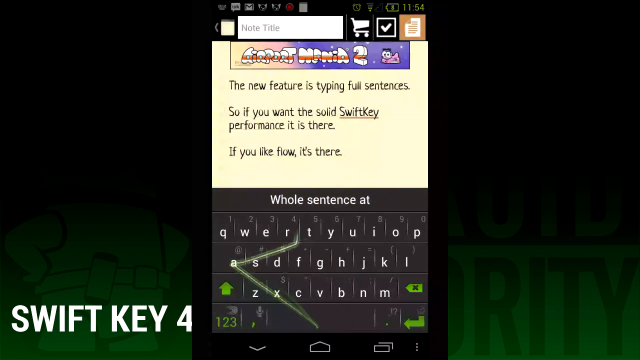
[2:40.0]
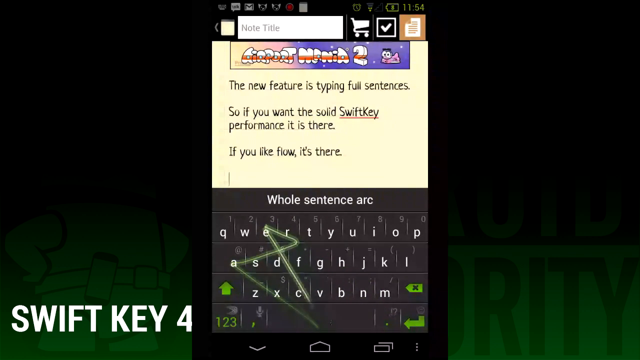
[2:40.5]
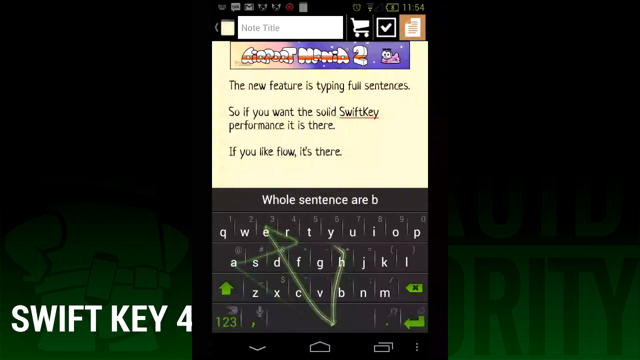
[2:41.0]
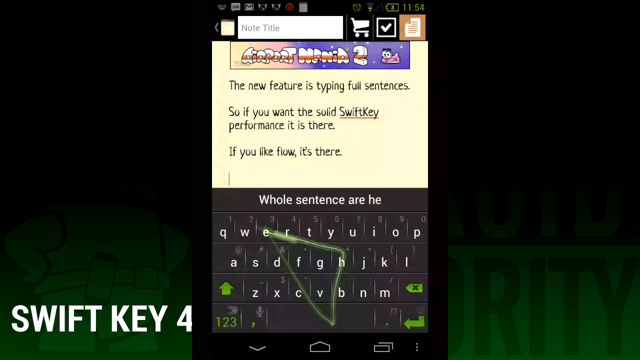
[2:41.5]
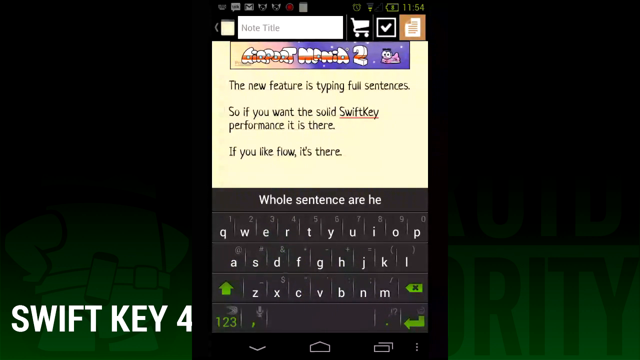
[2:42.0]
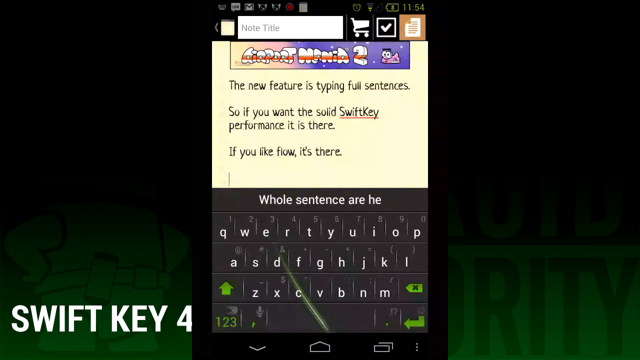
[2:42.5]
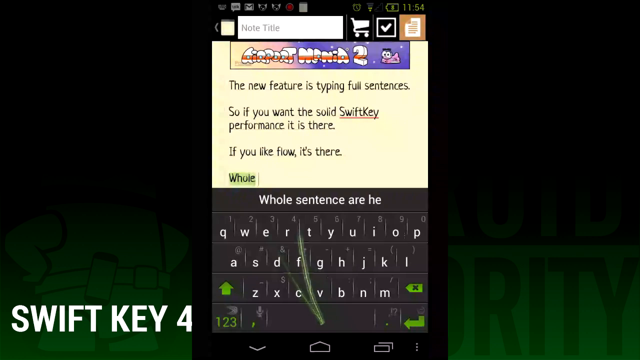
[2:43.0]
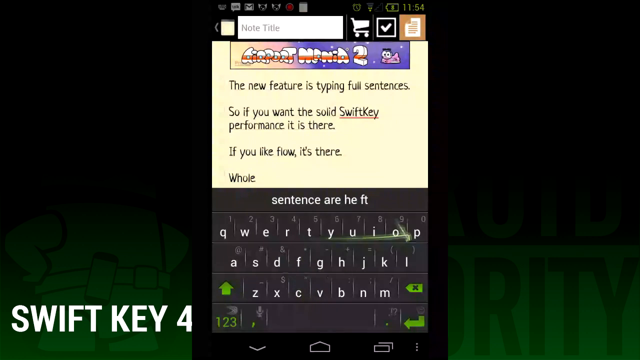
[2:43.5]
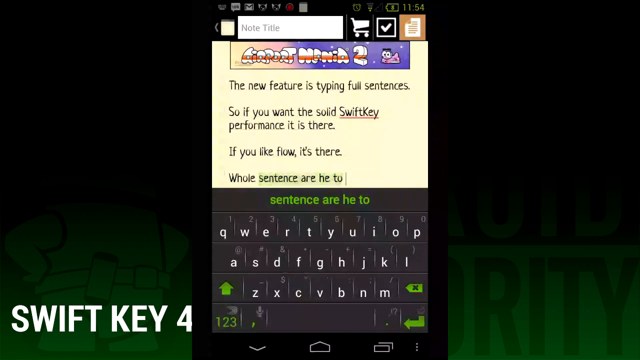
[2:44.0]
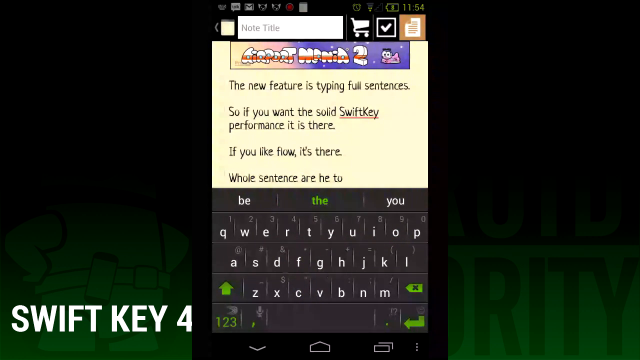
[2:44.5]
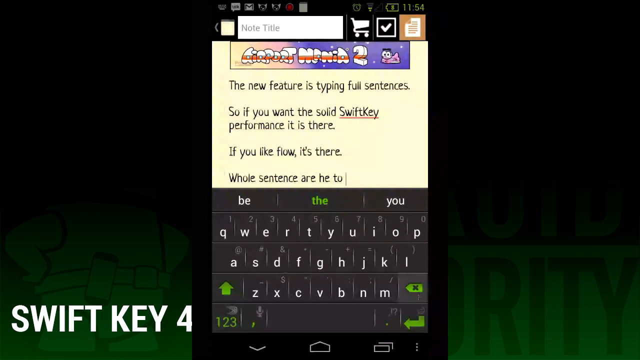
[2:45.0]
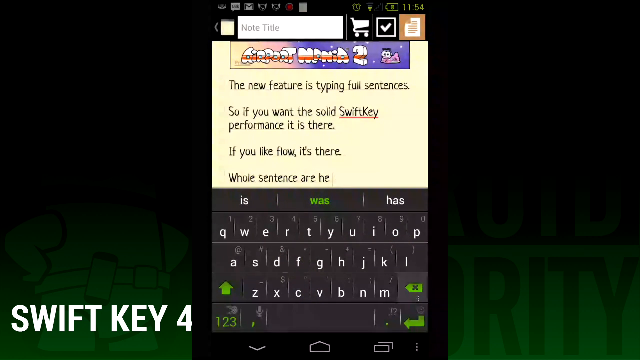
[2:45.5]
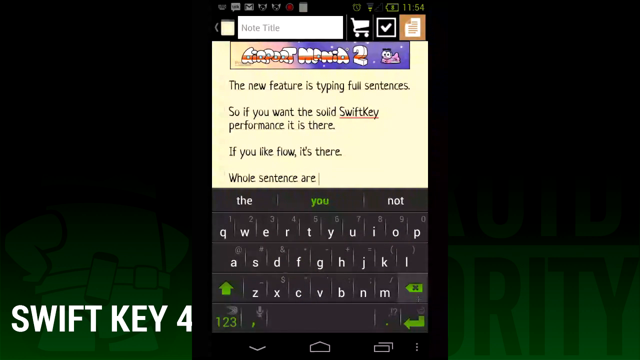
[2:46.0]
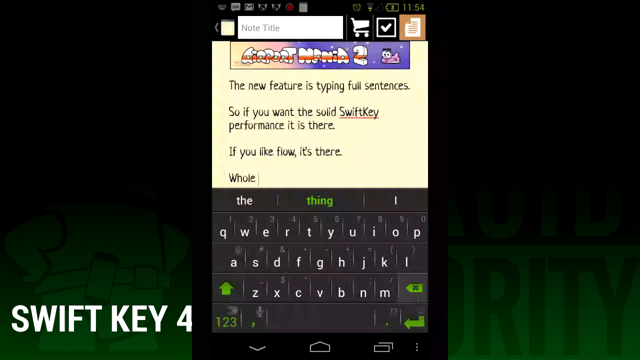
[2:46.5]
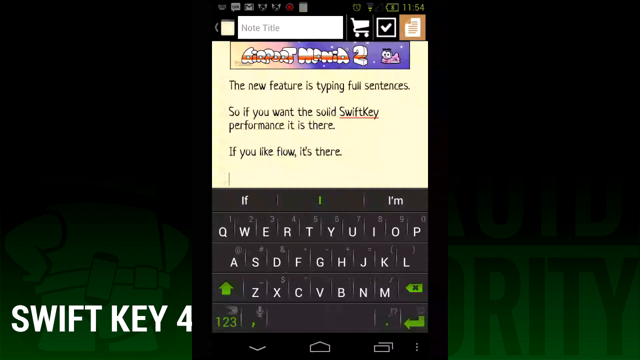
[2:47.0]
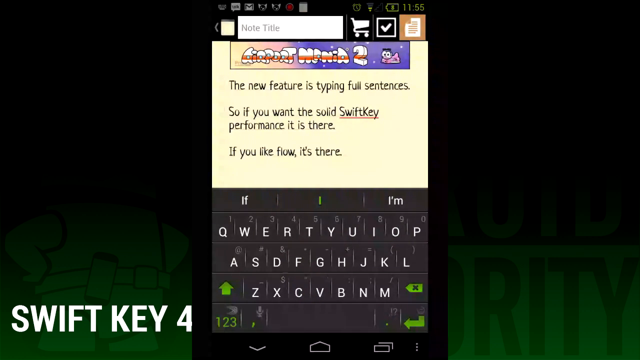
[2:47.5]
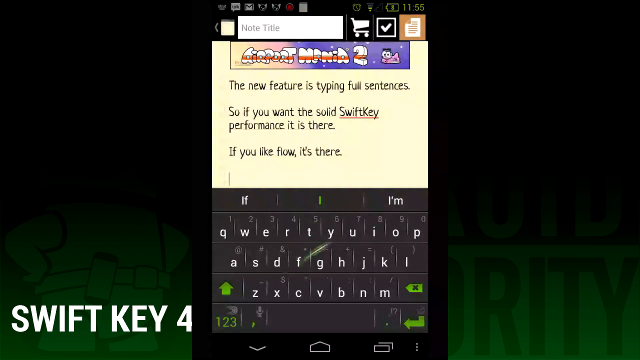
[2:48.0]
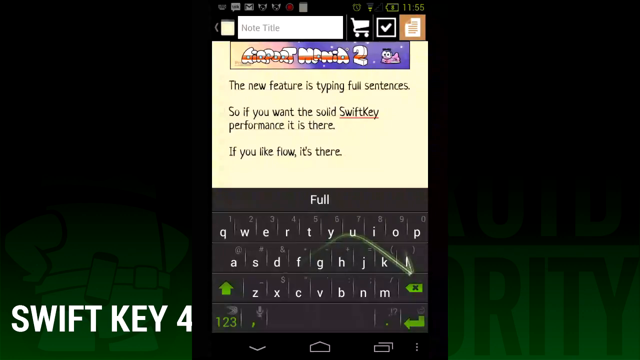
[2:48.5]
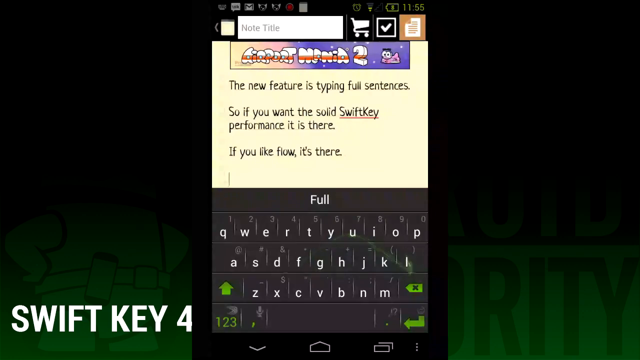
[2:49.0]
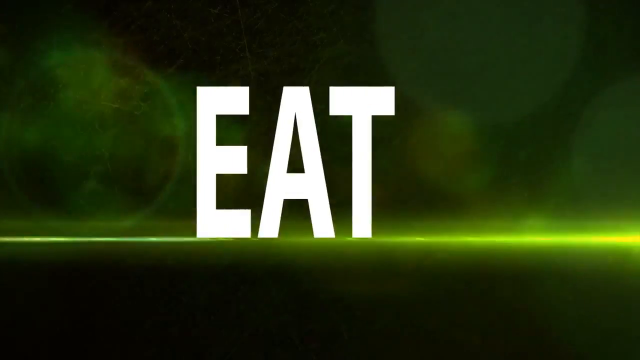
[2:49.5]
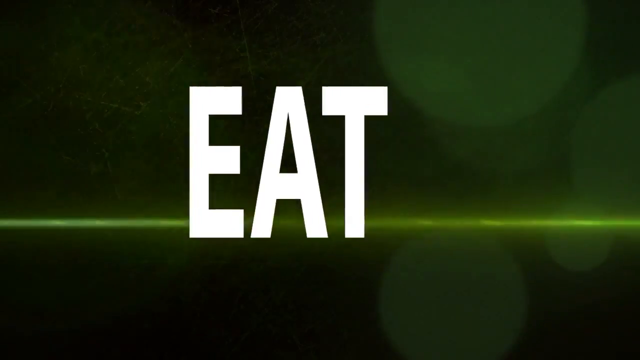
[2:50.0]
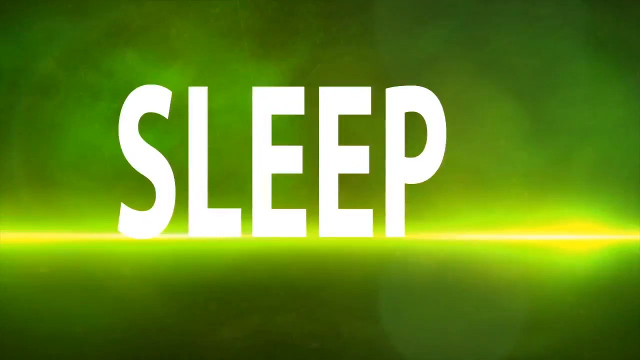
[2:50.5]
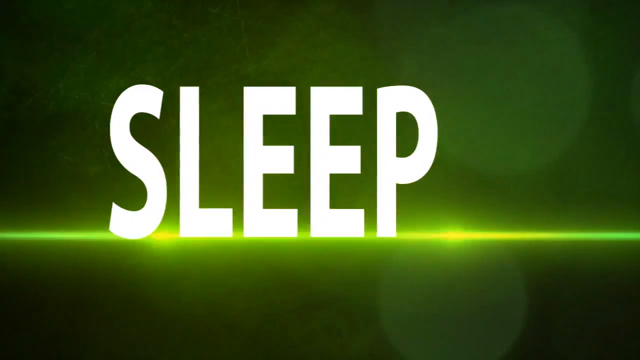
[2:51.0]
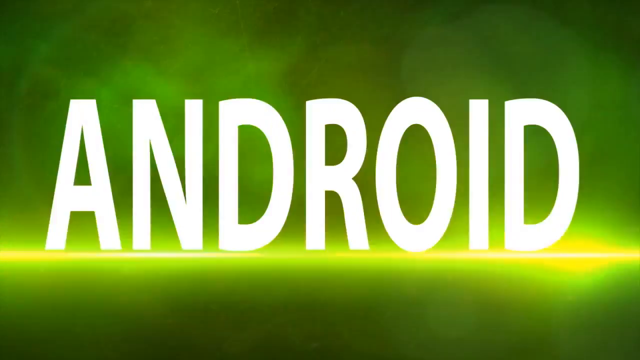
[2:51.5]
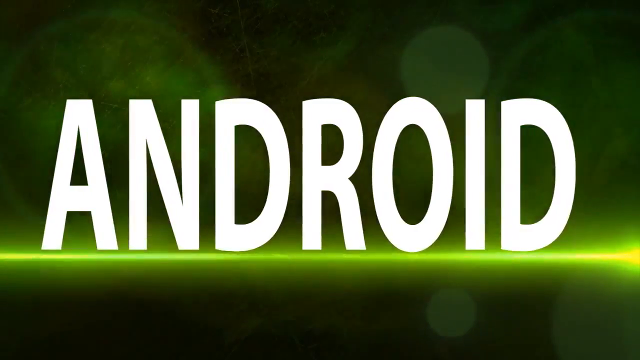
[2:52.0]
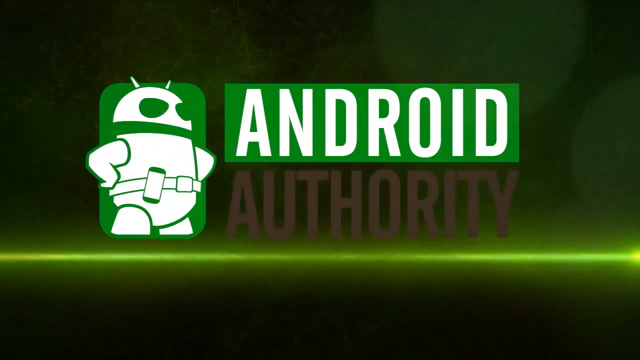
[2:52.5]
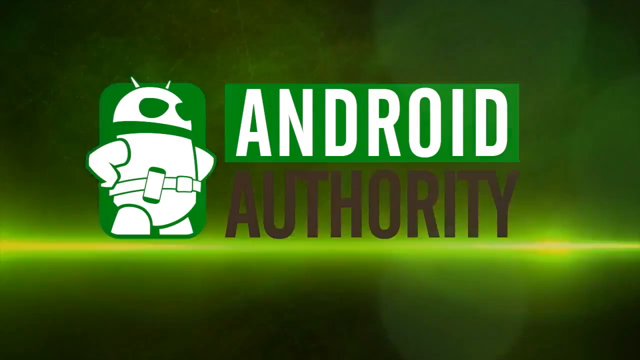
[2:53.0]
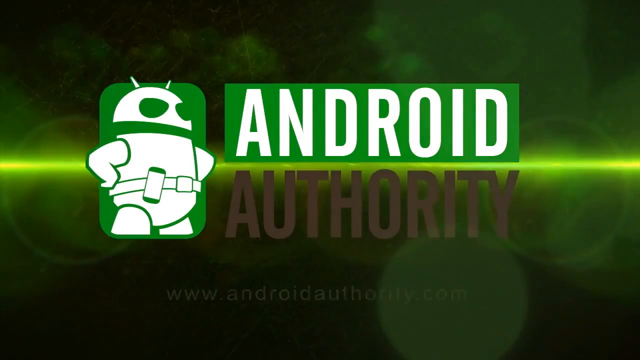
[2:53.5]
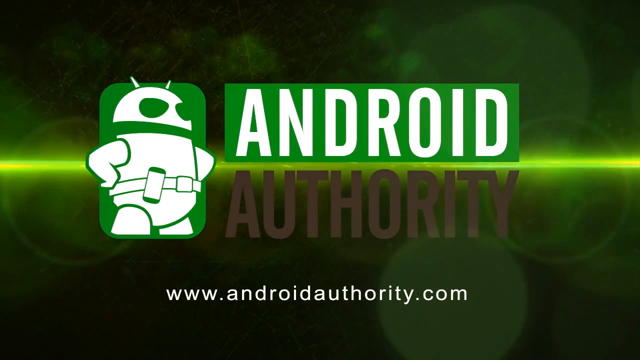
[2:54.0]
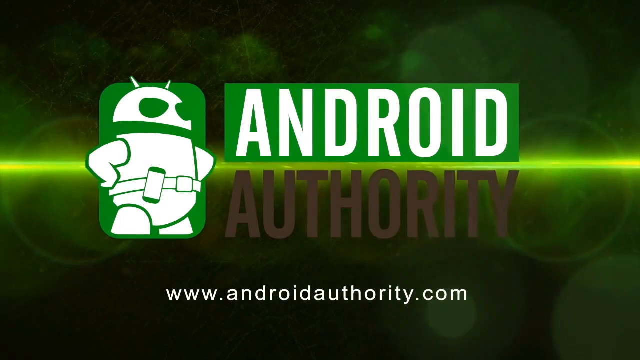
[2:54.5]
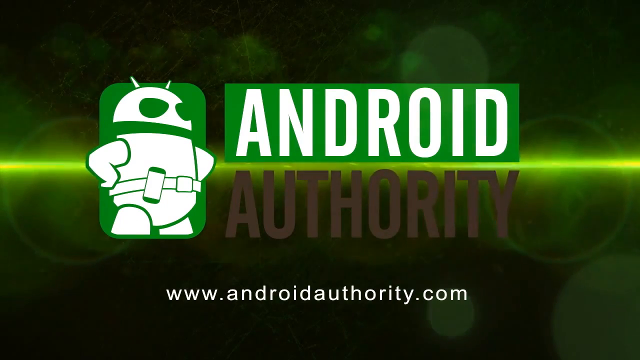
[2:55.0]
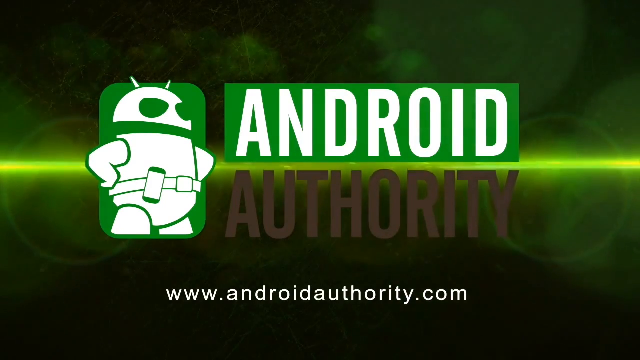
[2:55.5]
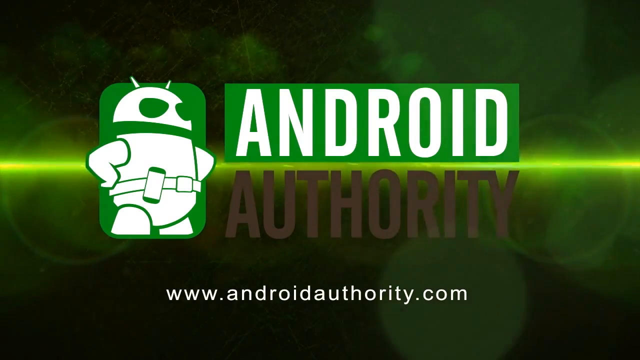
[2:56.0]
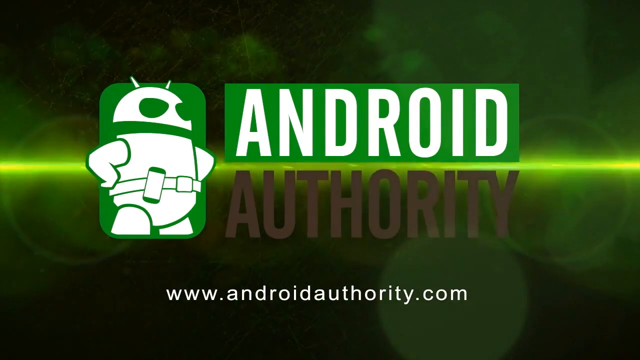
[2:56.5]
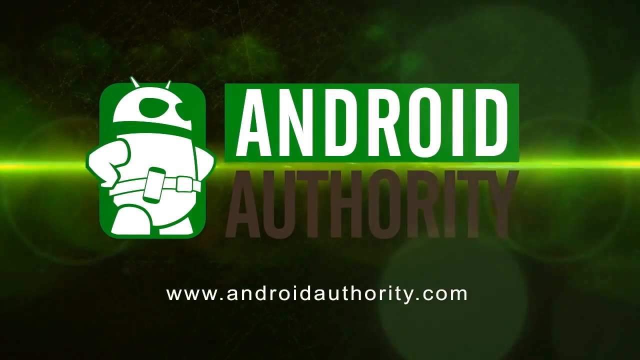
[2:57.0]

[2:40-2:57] The lower left-hand corner says "SwiftKey 4", with the 4 written as a numeral rather than spelled out. The phone screen is shown as a person types using SwiftKey, not very fast. Black text says "the new feature is type in full sentences so if you want the solid SwiftKey performance it is there if you like flow it is there", with no space between "Swift" and "key" here, unlike at the bottom. Then it says "whole sentence", and the person has to keep backspacing because the words are wrong. Then "eat sleep Android Android Authority" appears, and at the bottom it says "www.androidauthority.com".